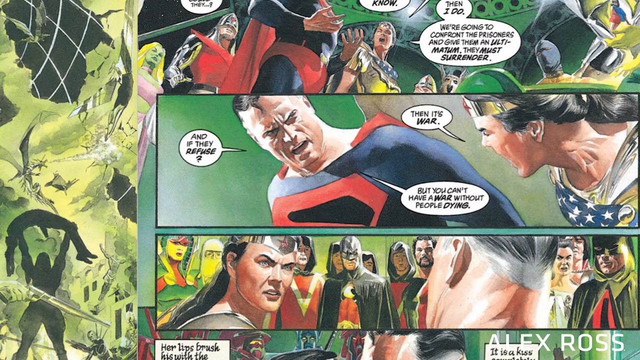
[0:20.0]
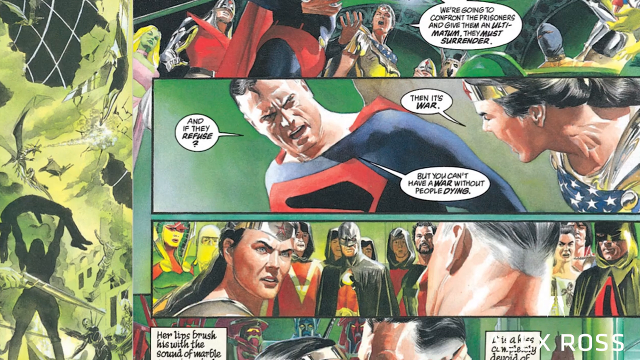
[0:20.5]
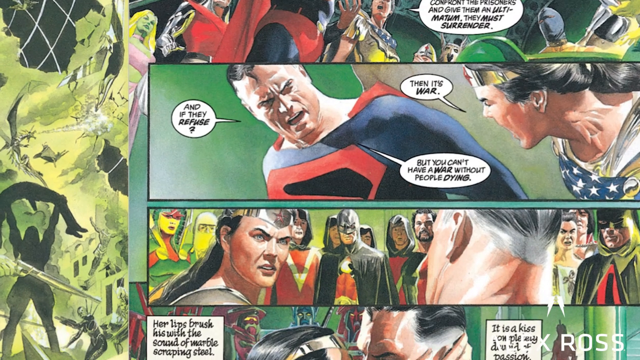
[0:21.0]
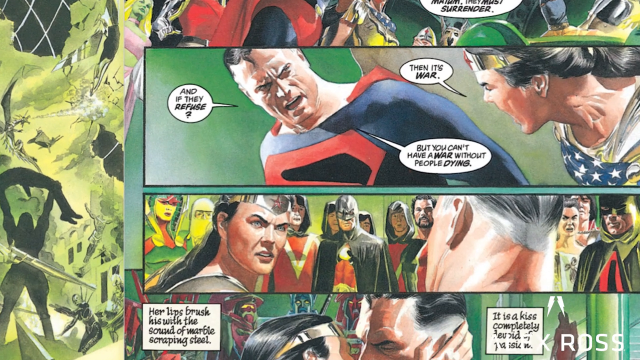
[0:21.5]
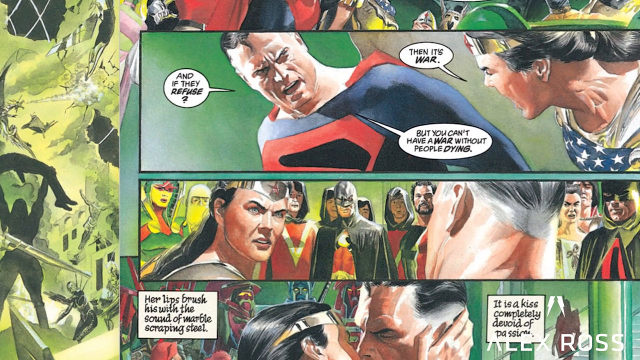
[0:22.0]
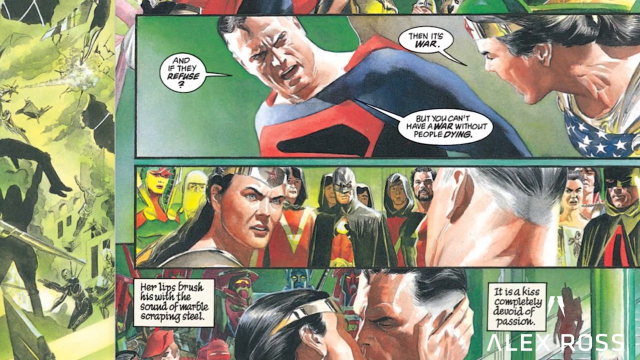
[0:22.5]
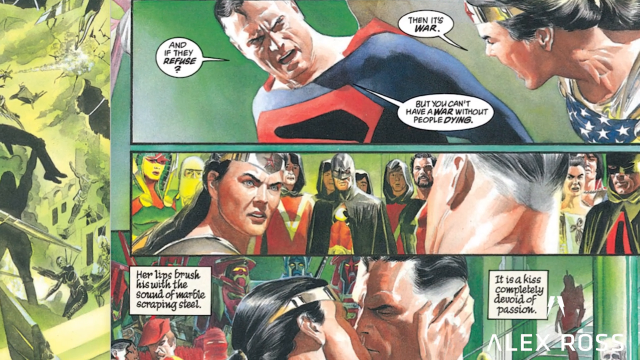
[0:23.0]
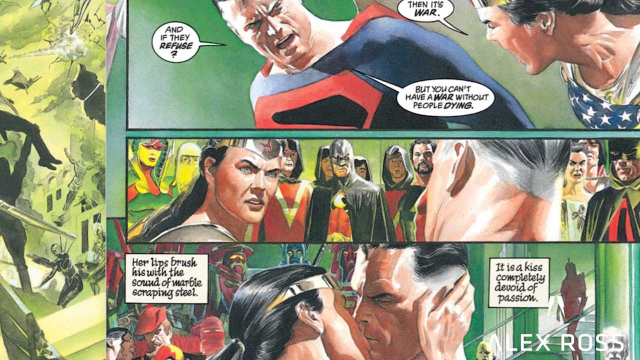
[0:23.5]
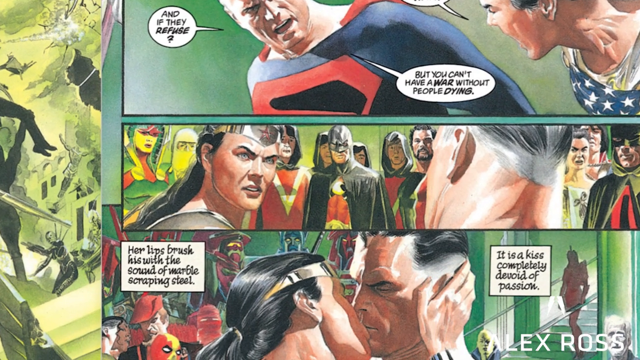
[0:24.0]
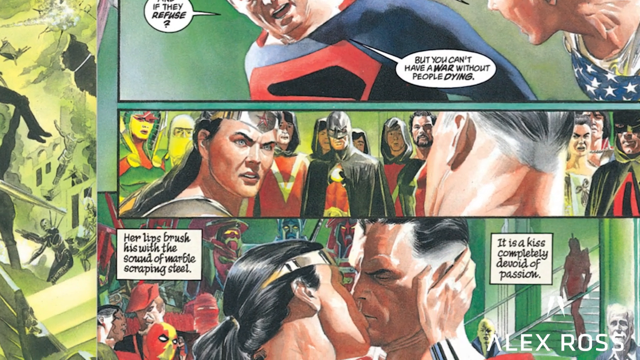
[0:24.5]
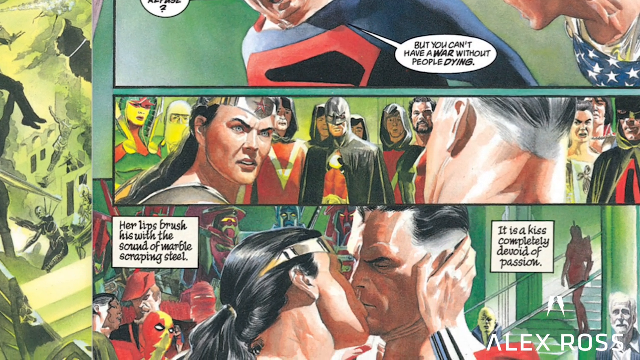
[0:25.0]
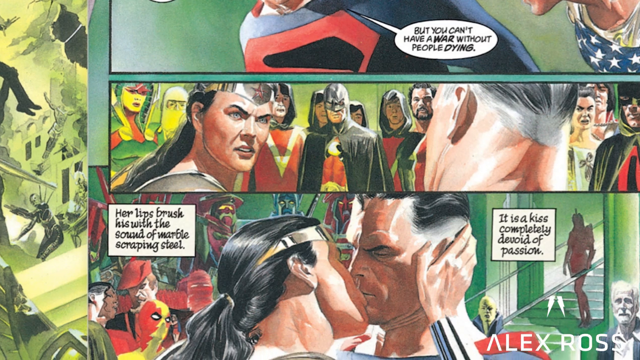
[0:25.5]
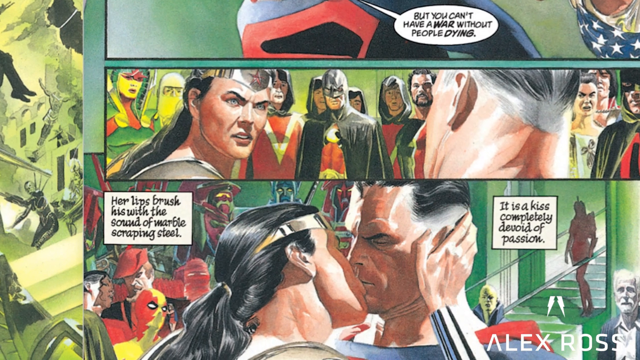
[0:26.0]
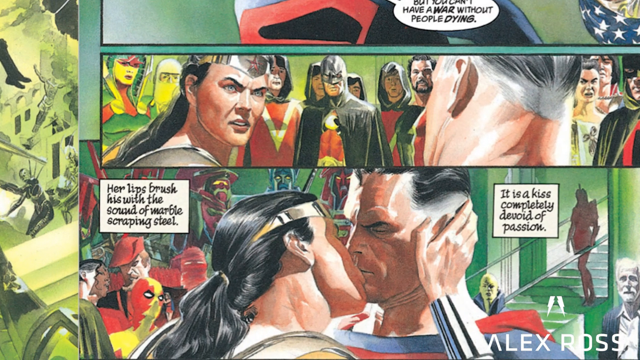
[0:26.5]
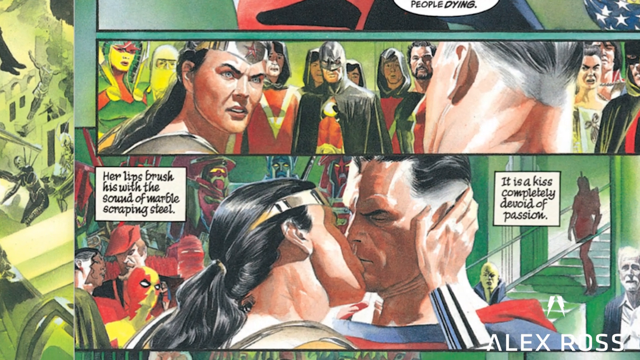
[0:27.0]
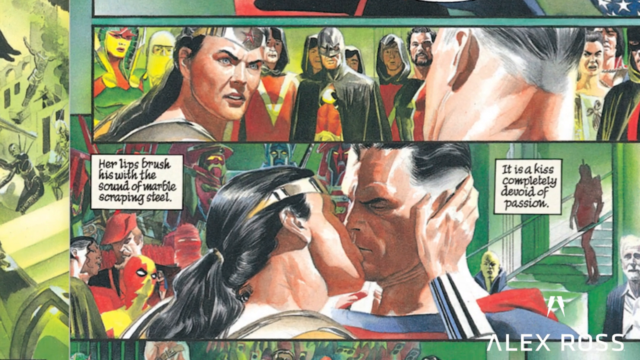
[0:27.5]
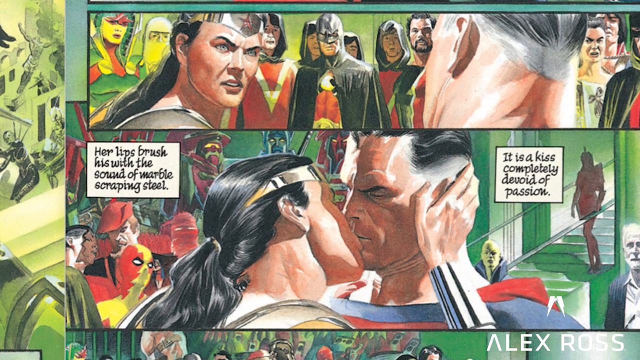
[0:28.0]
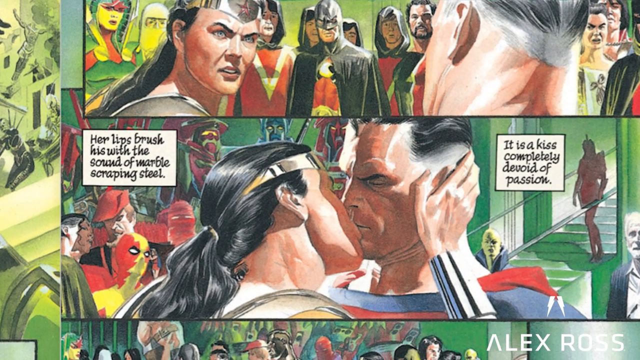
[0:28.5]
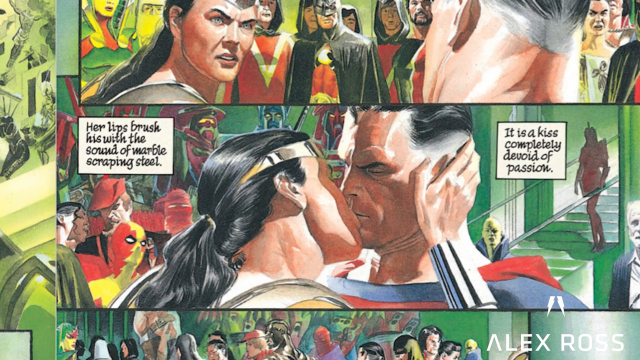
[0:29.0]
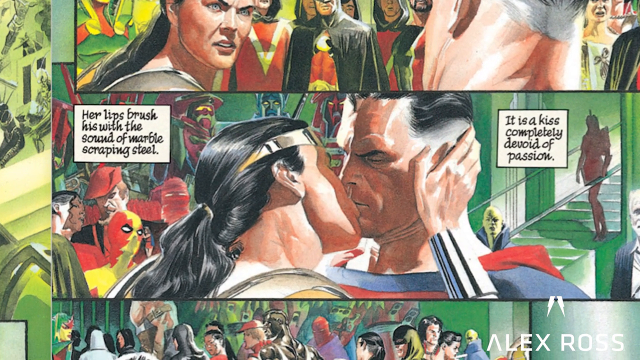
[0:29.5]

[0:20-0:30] Wonder Woman appears to the right of a figure in the centre of the screen, inside a rectangle-shaped box, with another rectangle beneath it. Around this is a background of many different characters, some in silhouette and some in detail. Speech bubbles show the characters' conversation, with lines such as "and if they refuse?", "then it's war." and "you can't have a war without people dying". The view then scrolls down to the bottom of the screen, where text reads "her lips brush his with the sound of marble scraping steel. It is a kiss completely devoid of passion". This text is not in speech bubbles but in squares, one on the left and one on the right-hand side of the screen, accompanying a depiction of Superman and Wonder Woman kissing.